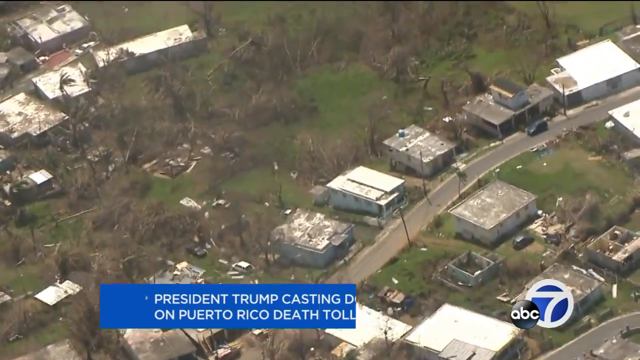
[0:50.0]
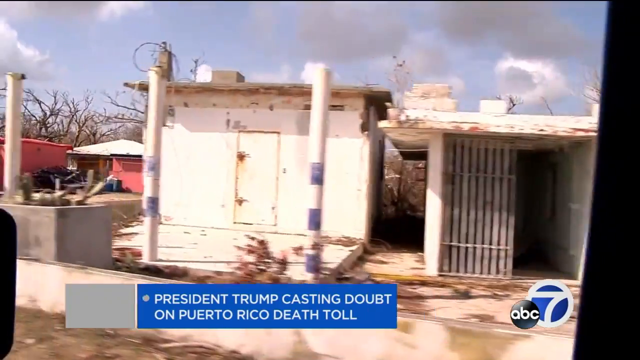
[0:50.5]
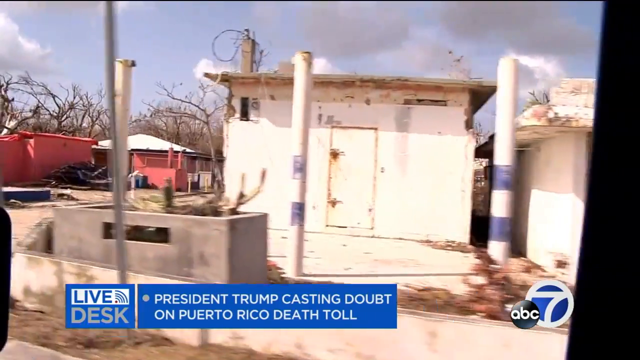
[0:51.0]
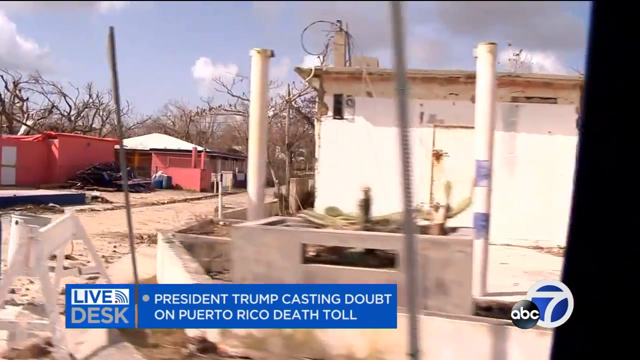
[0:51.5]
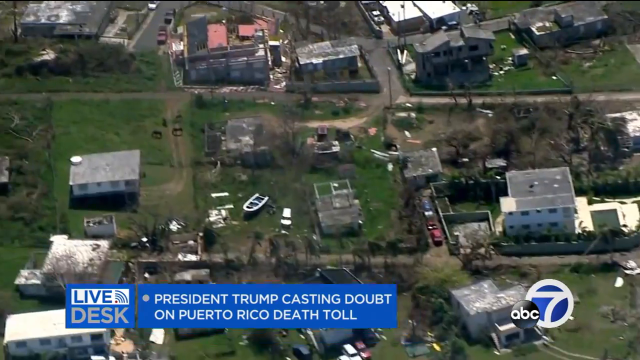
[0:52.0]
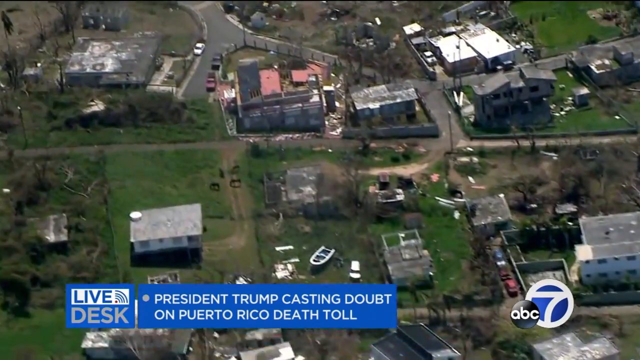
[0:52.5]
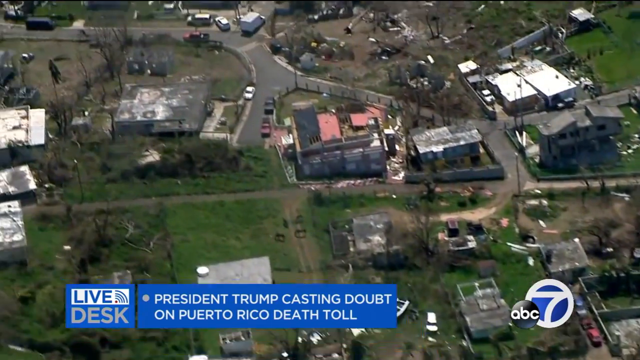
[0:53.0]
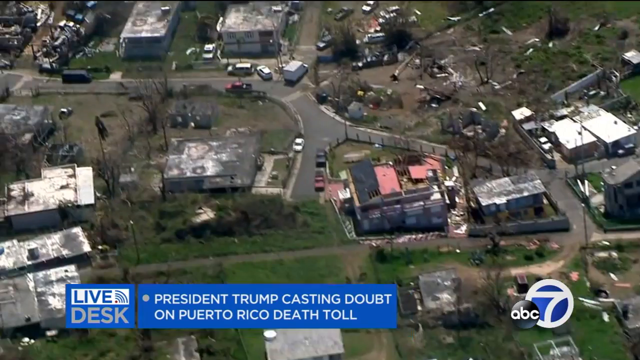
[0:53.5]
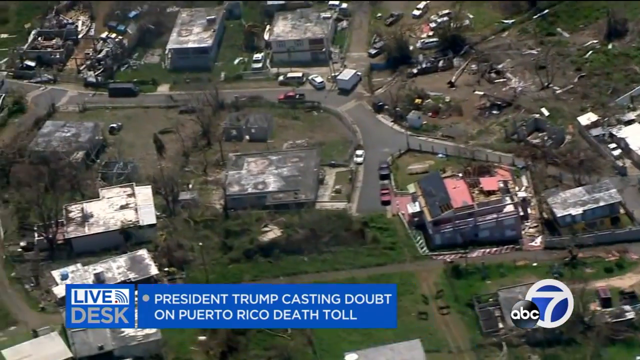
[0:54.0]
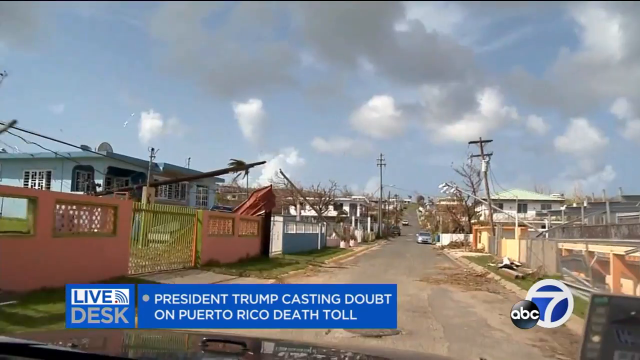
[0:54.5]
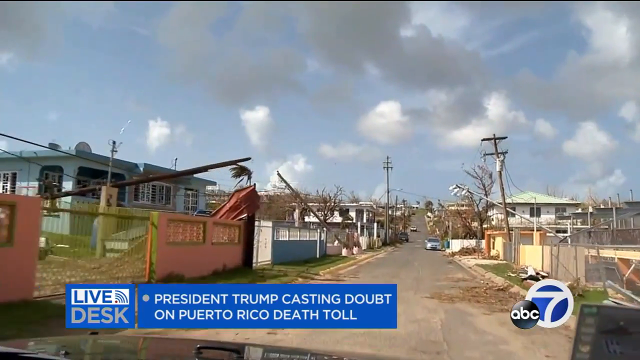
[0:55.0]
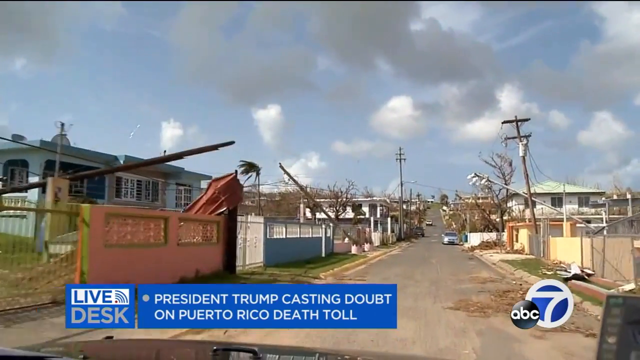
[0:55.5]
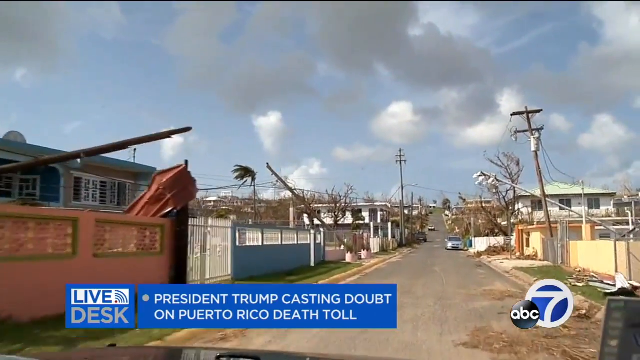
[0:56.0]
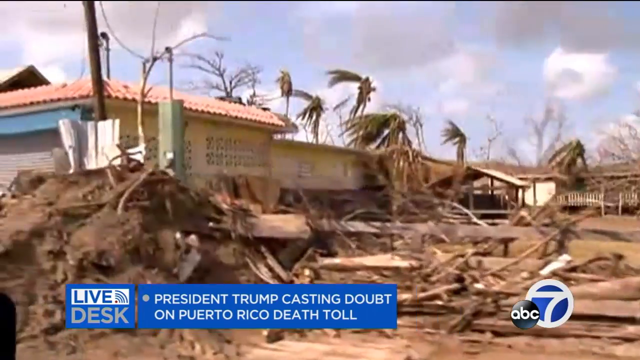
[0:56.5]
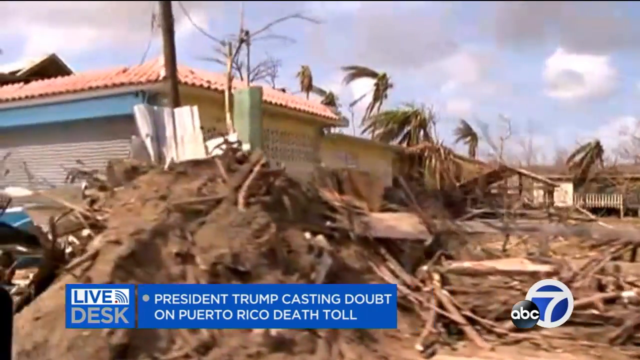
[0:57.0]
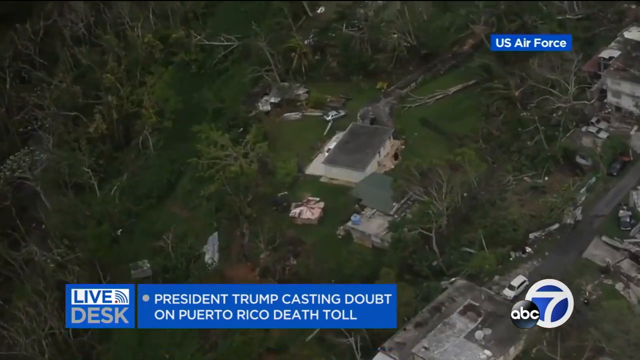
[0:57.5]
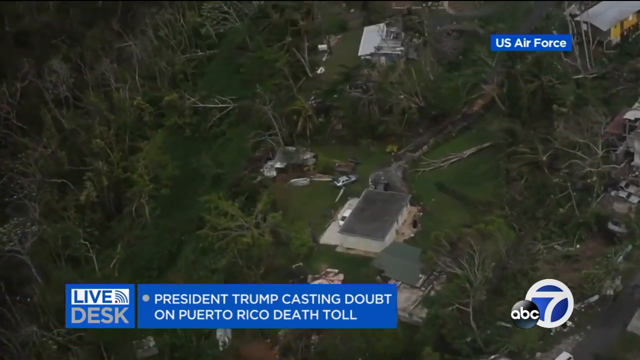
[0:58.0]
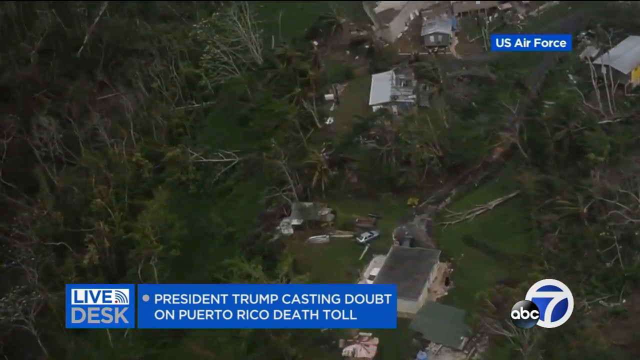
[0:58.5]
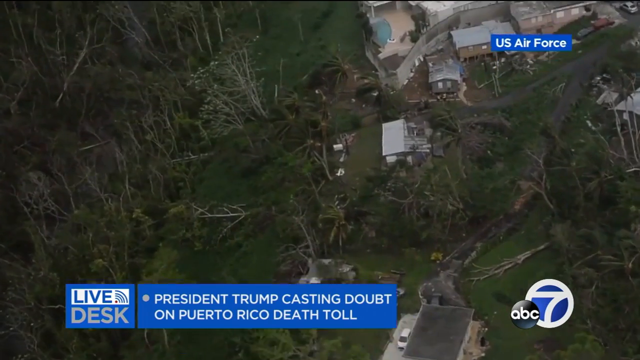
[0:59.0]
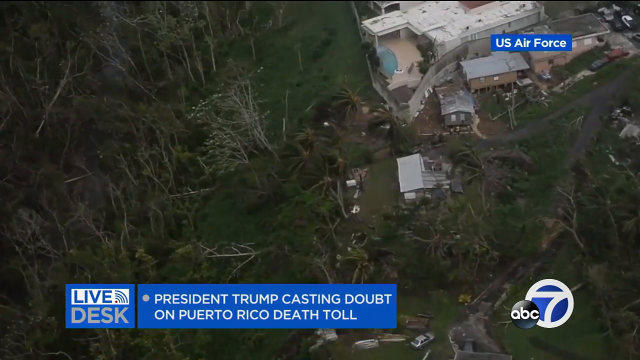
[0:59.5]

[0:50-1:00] The video shows on-the-ground footage of the same town, filmed from a moving vehicle out of the right window. It starts on a small white building and then approaches an intersection. It goes back to the aerial view, with the camera panning up and to the left over a roadway running through the suburb, where multiple cars are chaotically parked along the roadway among buildings, some of which are partially destroyed. Text at the bottom reads "live President Trump casting doubt on Puerto Rico death toll". The video cuts to another on-the-ground view pointed out of the front of the car, then to another side view showing a destroyed building, then quickly back to the aerial view. This shows a more forested area where some of the trees appear to have fallen down, and the camera pans upward to a partially destroyed building.